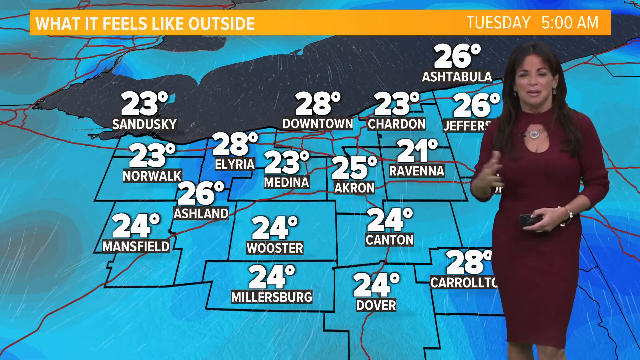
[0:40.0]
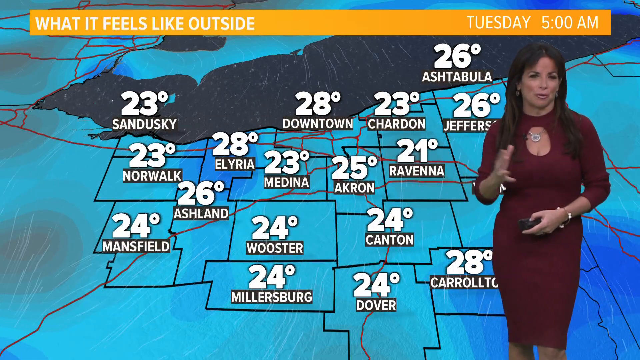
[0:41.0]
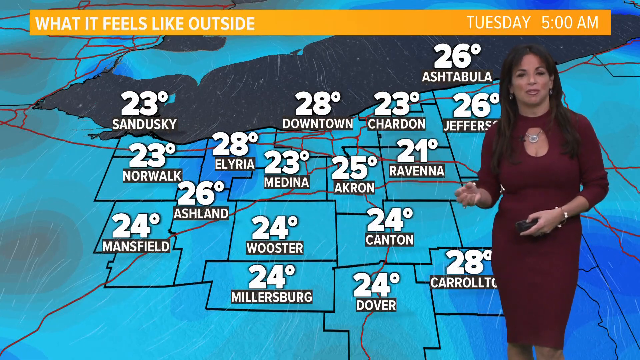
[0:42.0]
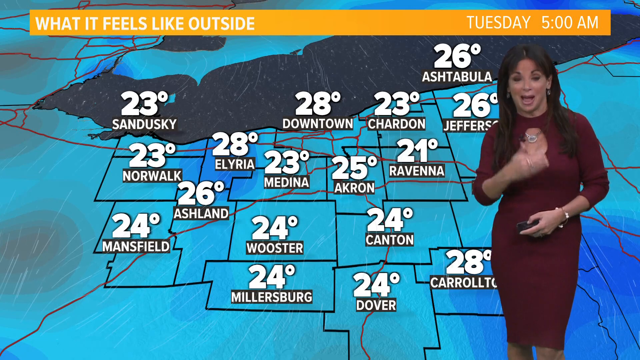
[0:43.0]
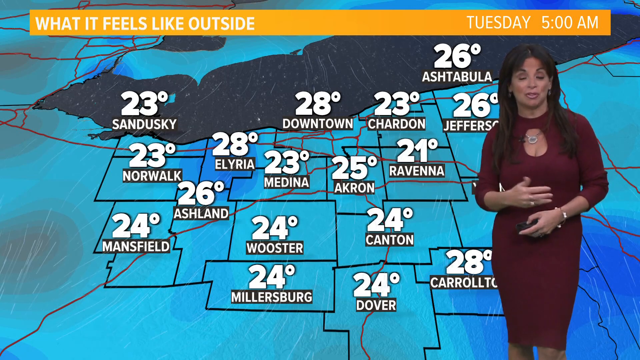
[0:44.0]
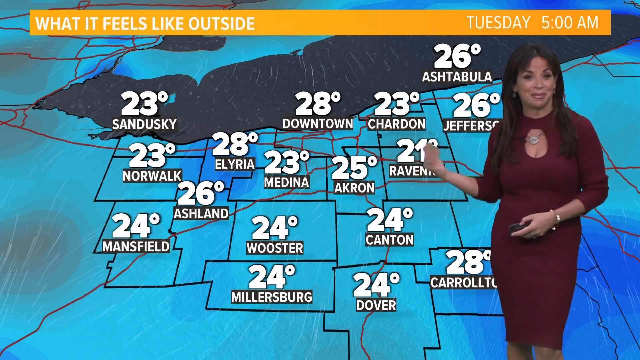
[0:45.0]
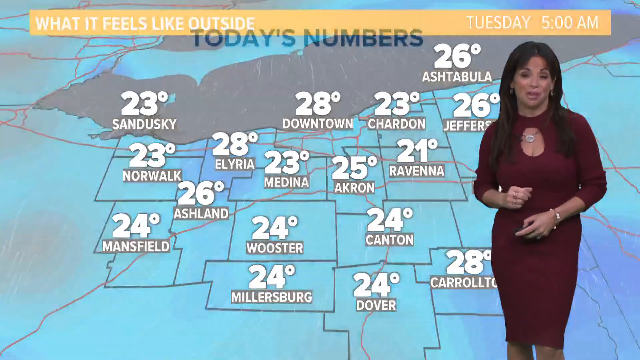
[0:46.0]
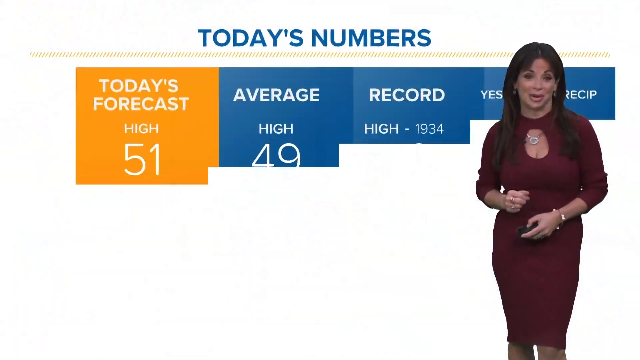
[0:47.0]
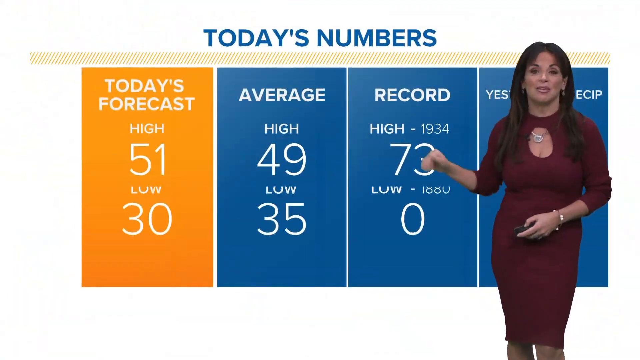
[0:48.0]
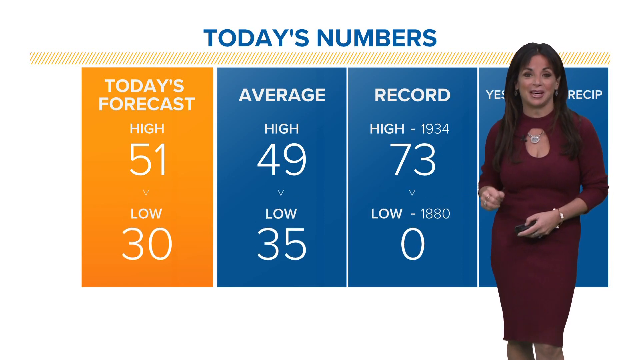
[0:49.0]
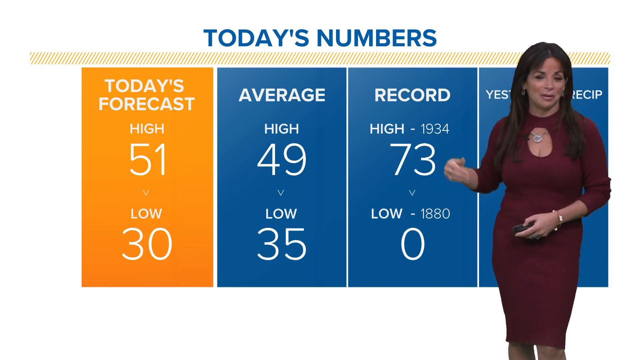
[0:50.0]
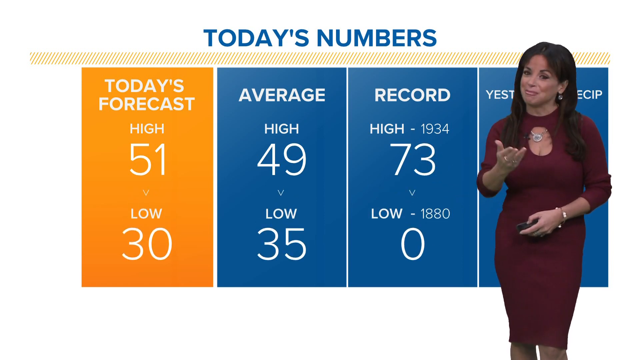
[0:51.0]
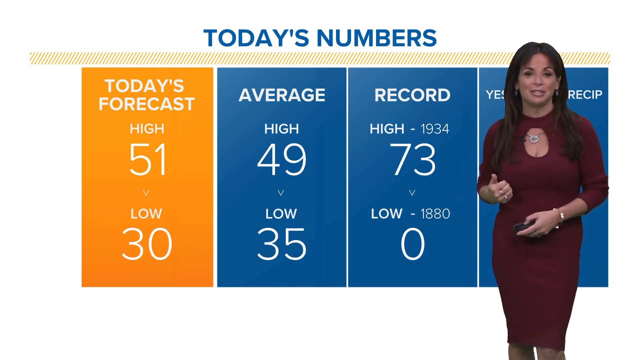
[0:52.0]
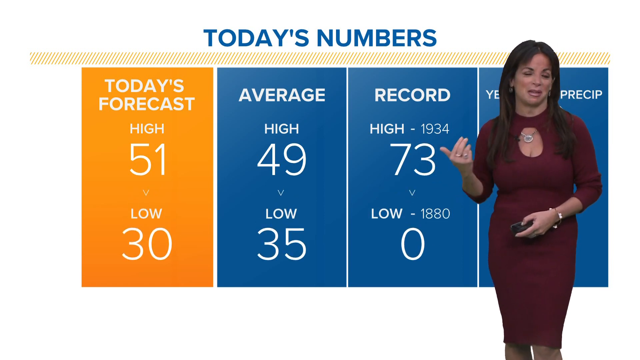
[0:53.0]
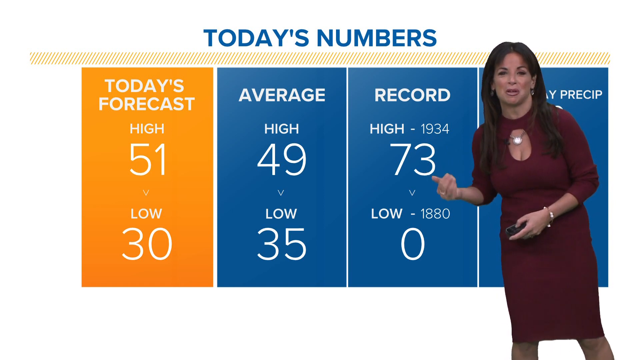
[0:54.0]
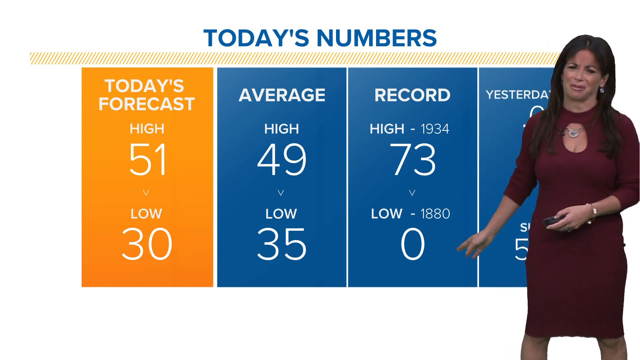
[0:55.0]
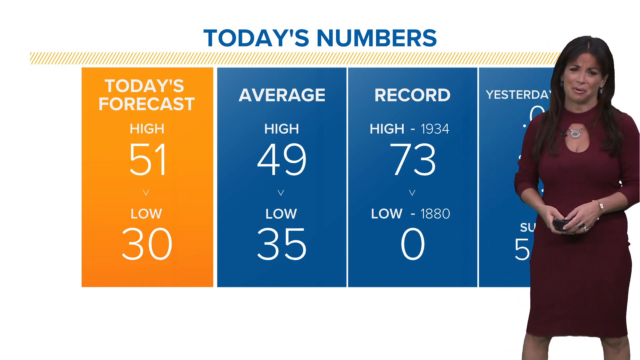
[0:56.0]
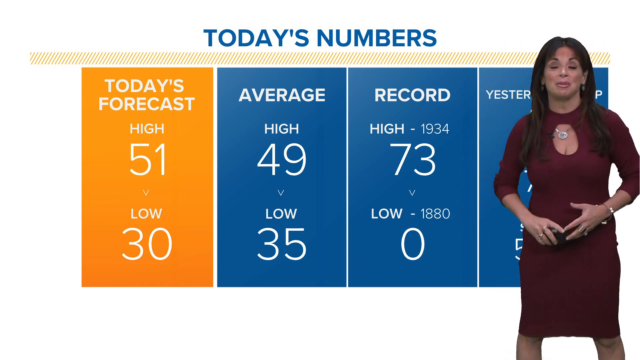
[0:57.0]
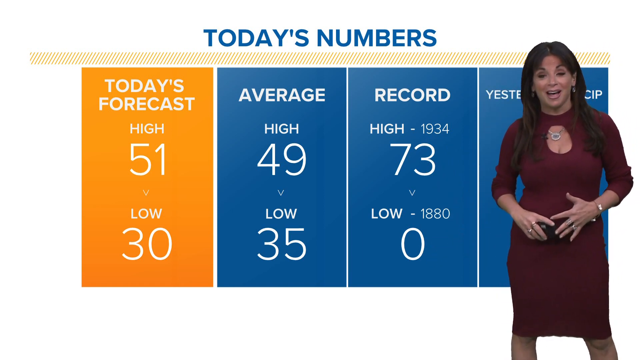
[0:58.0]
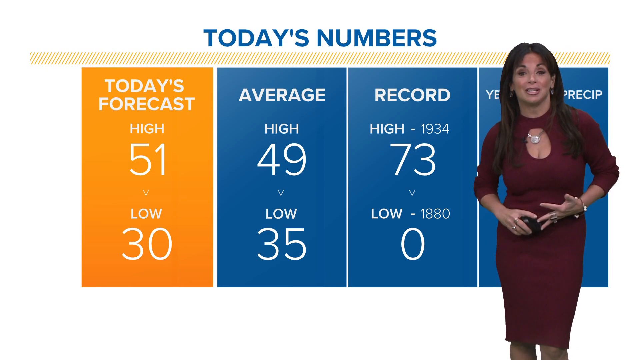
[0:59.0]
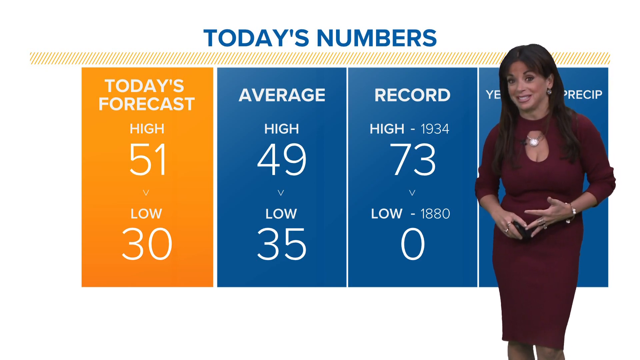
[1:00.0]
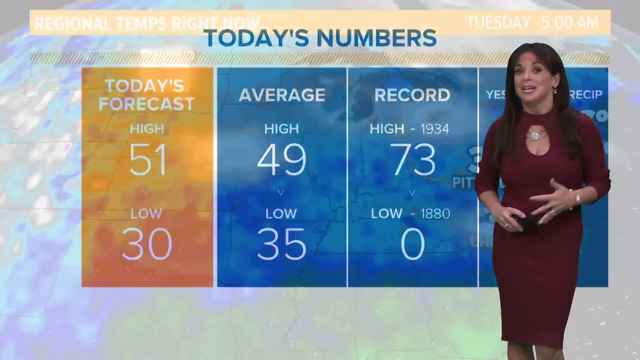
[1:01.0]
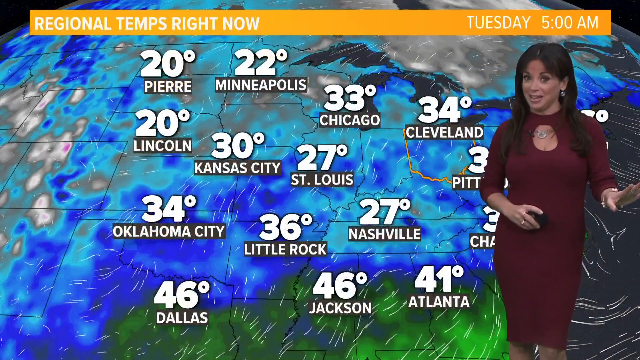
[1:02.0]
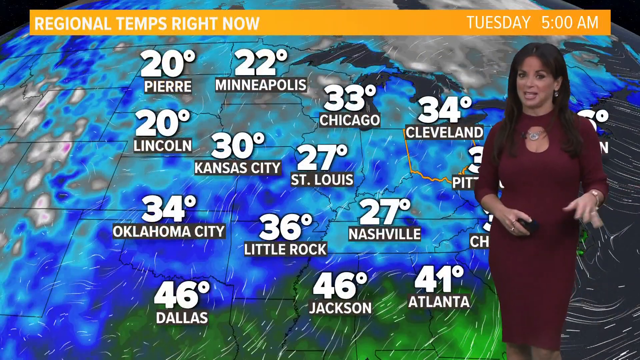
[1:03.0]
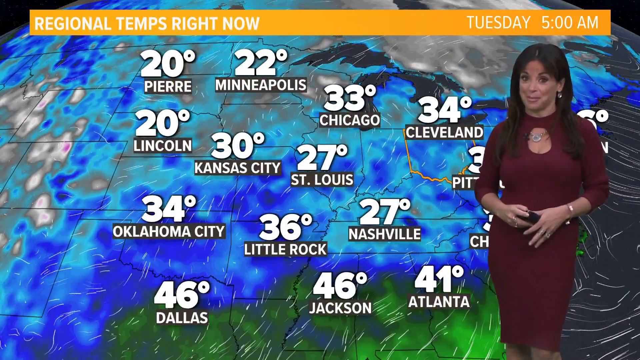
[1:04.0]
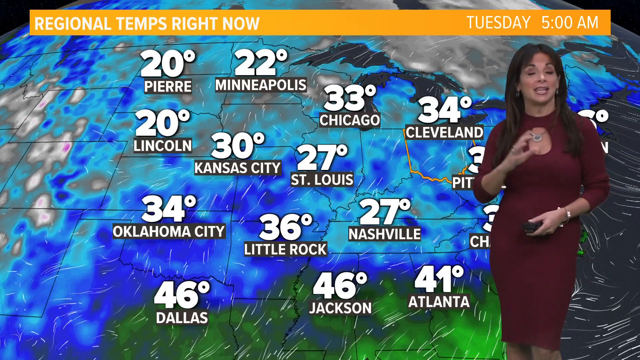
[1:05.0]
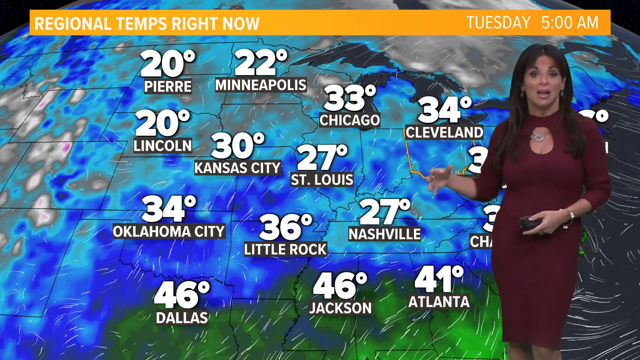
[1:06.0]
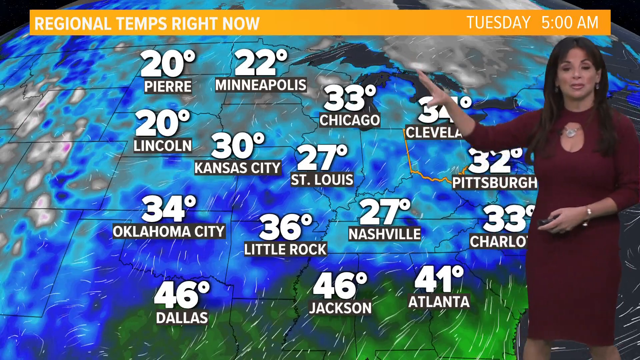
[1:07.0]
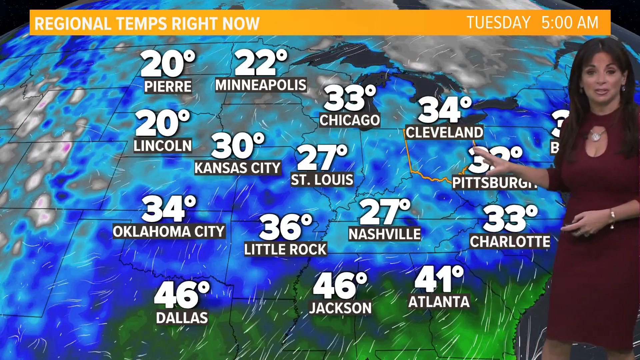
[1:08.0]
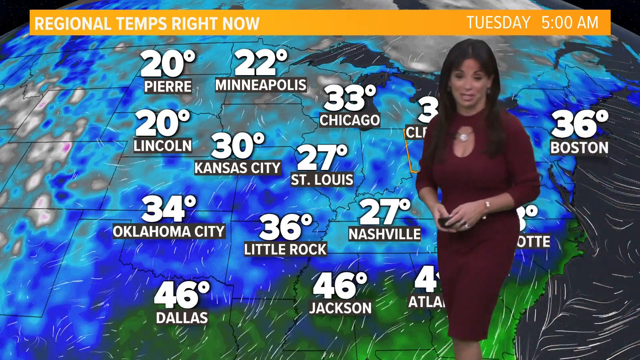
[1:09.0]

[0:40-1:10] The woman is on the right side of the screen, while most of the screen is taken up by a map that appears blue, with various locations marked and degrees shown above them. Most of the temperatures are fairly low. The lowest is 21 degrees in Ravenna, and the highest appears to be 28 degrees above downtown, the same temperature as Elyria. An orange banner at the top reads "What it feels like outside," followed to the right by the day, Tuesday, and then the time, 5 a.m. The woman in the burgundy dress gestures toward the map, and the screen changes; the top now reads "today's numbers." Four columns give the forecast. Today's column, in orange, shows a high of 51 and a low of 30; the other three columns are blue. To its right, the average shows a high of 49 and a low of 35. Next are the records: a record high of 73 degrees from 1934 and a record low of zero from 1880.